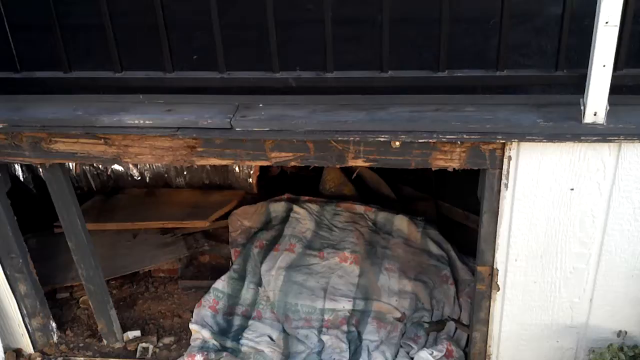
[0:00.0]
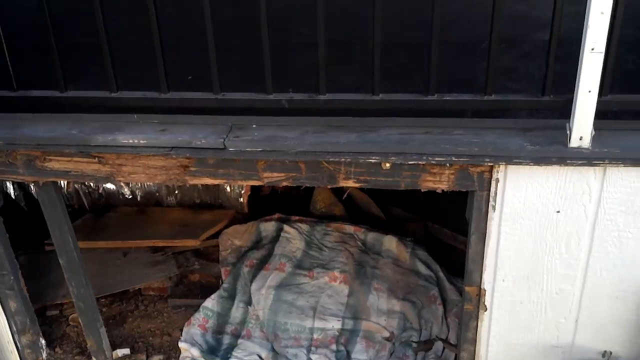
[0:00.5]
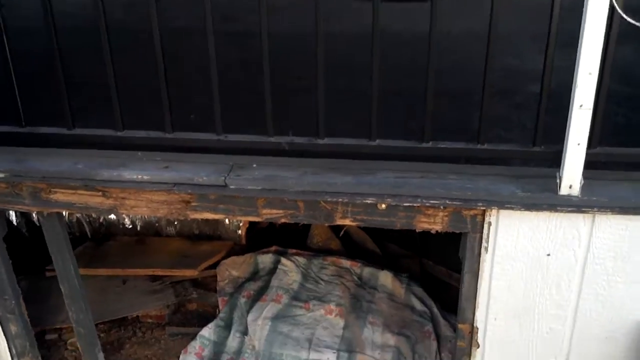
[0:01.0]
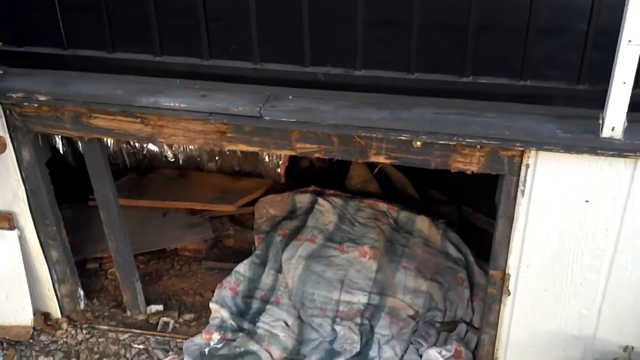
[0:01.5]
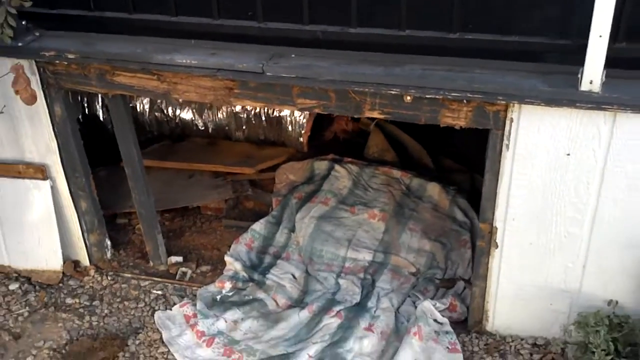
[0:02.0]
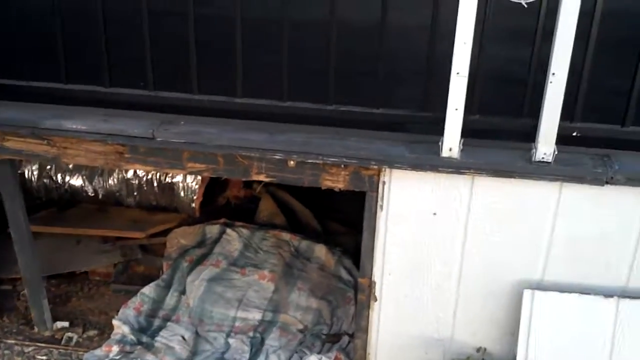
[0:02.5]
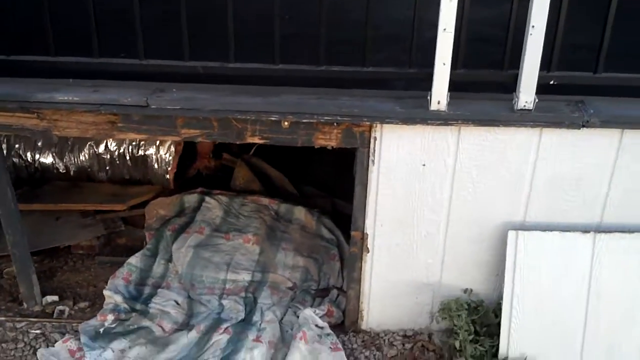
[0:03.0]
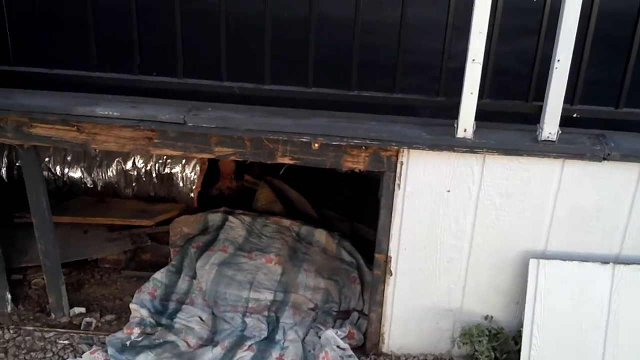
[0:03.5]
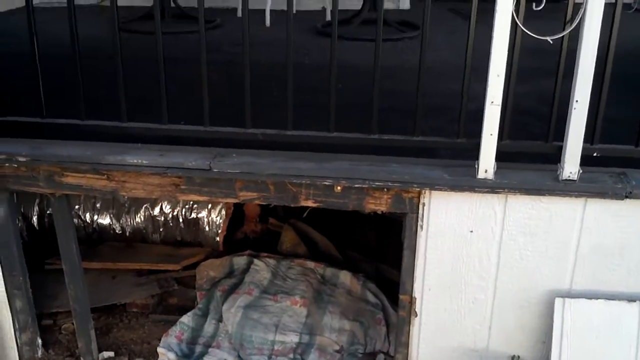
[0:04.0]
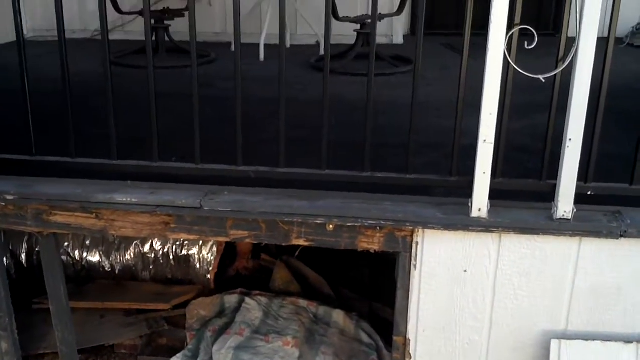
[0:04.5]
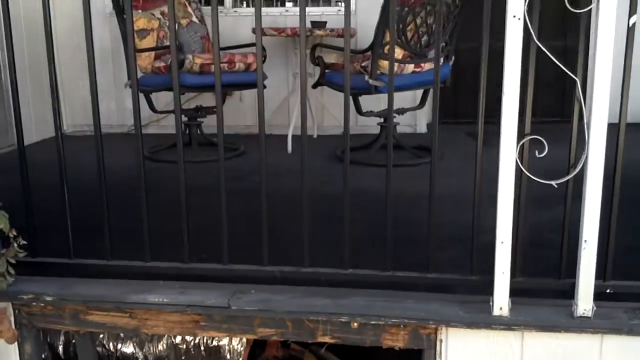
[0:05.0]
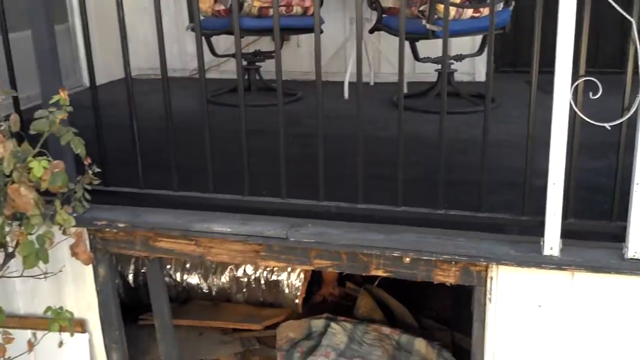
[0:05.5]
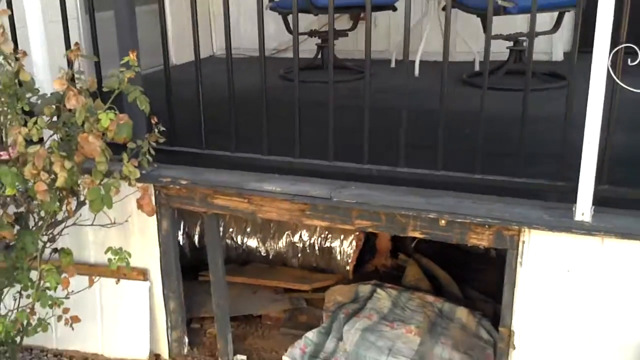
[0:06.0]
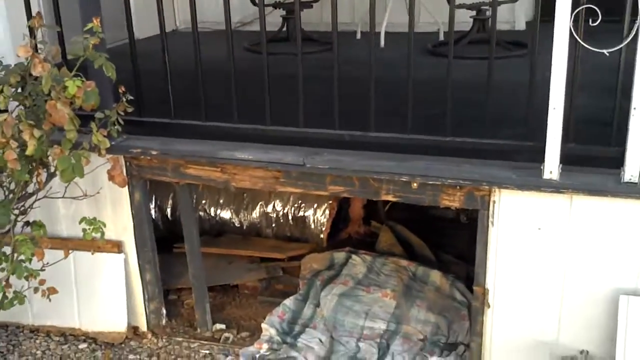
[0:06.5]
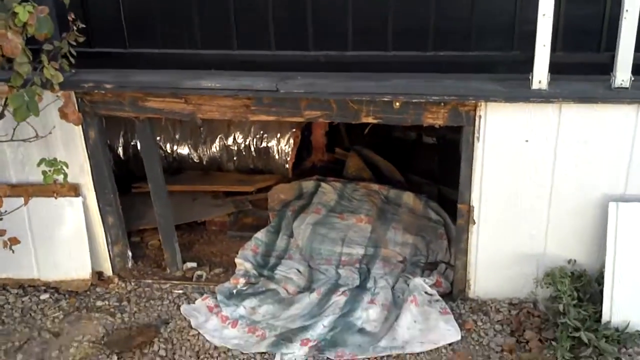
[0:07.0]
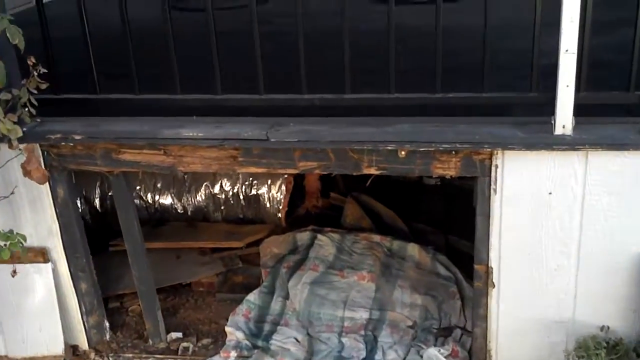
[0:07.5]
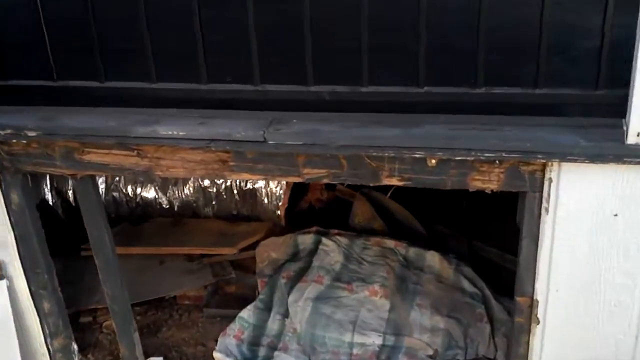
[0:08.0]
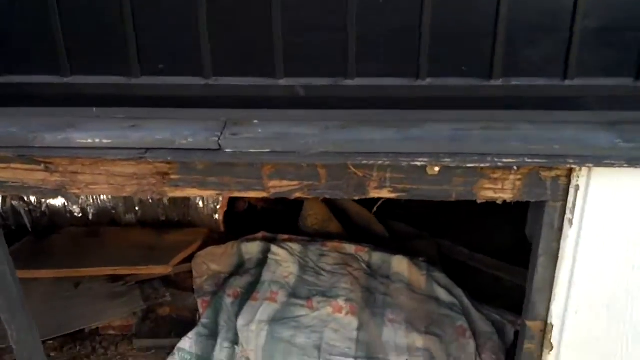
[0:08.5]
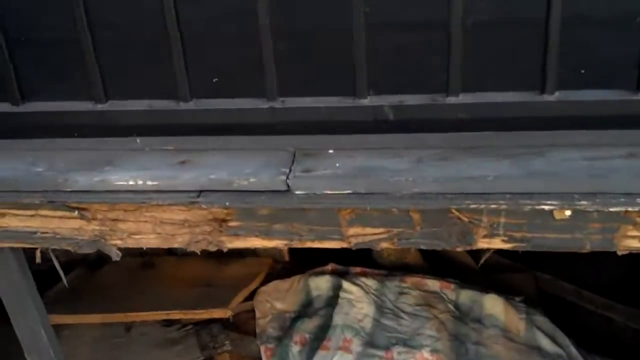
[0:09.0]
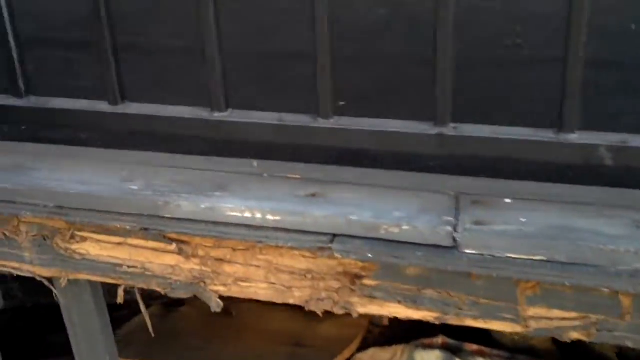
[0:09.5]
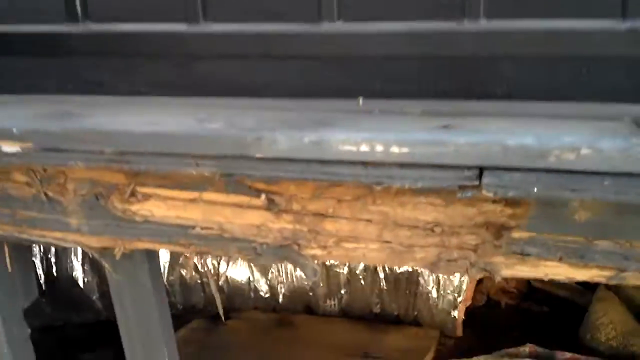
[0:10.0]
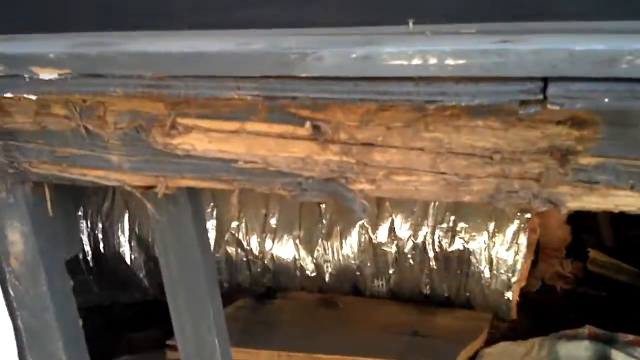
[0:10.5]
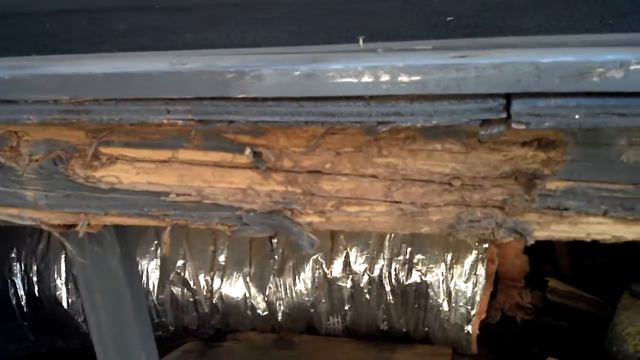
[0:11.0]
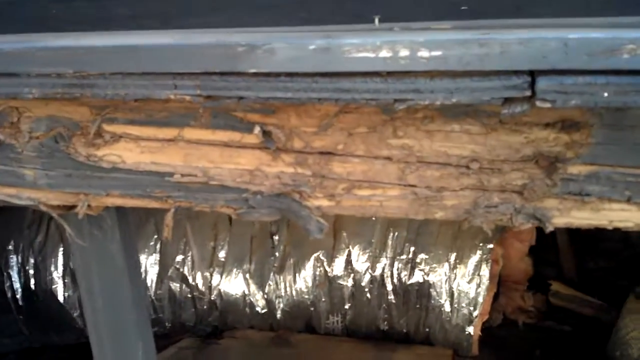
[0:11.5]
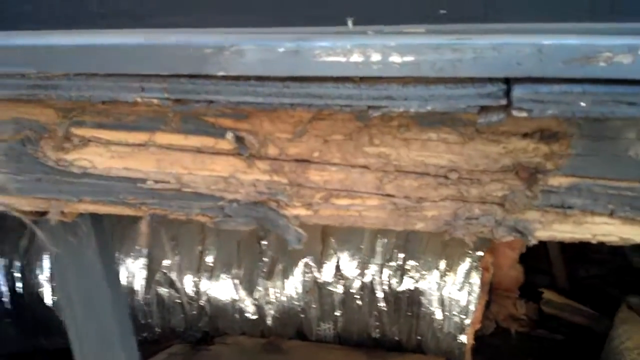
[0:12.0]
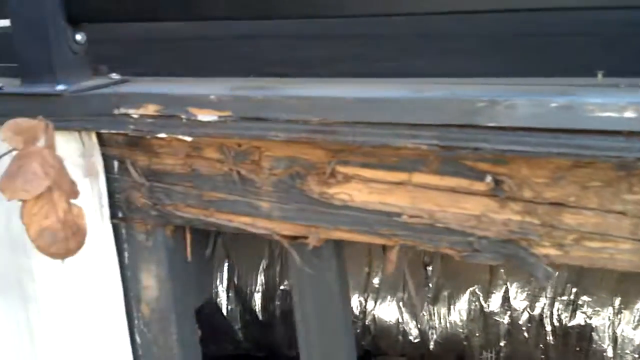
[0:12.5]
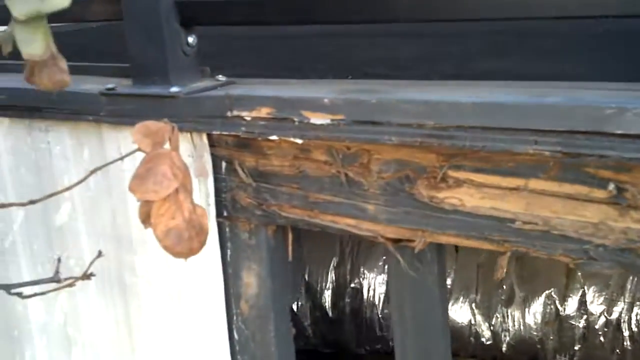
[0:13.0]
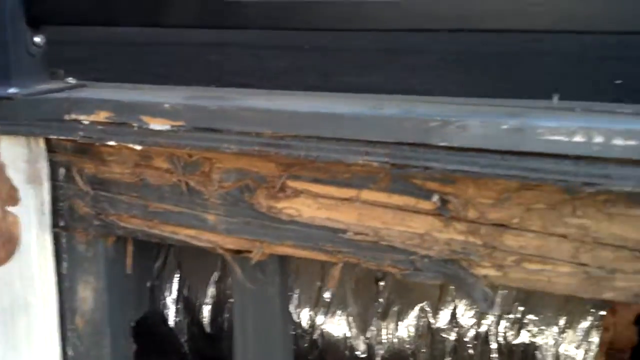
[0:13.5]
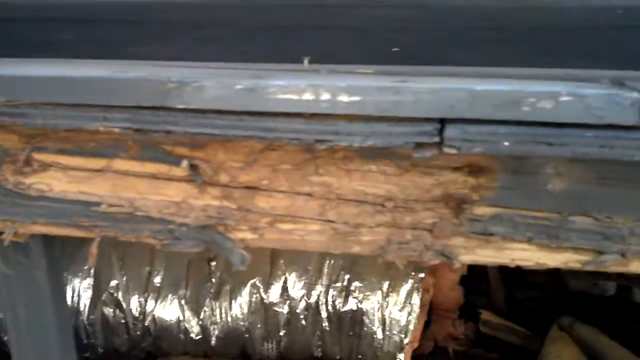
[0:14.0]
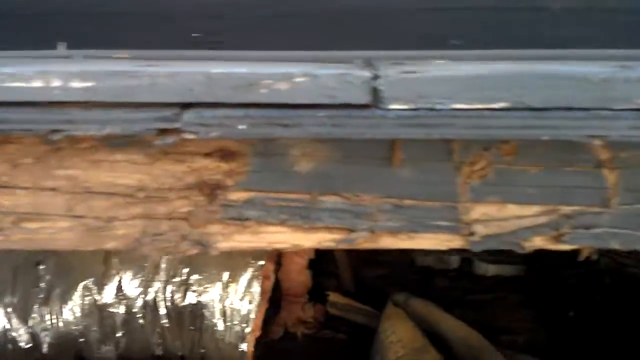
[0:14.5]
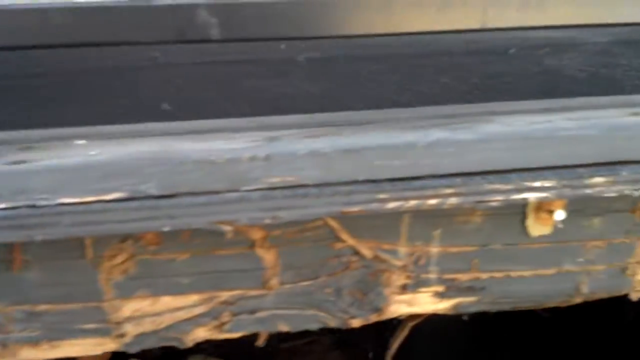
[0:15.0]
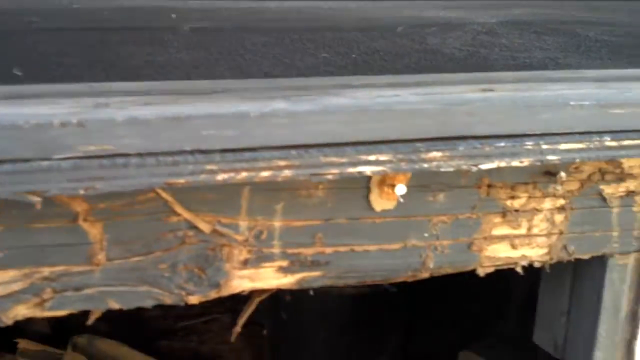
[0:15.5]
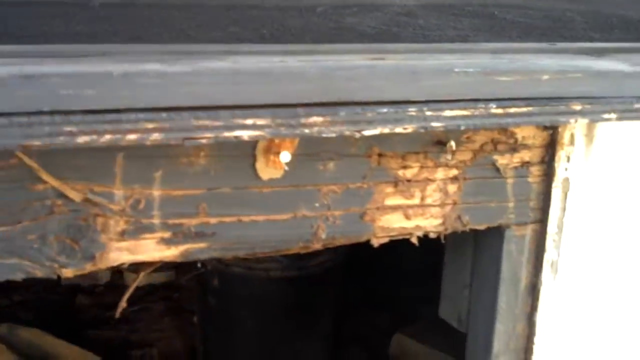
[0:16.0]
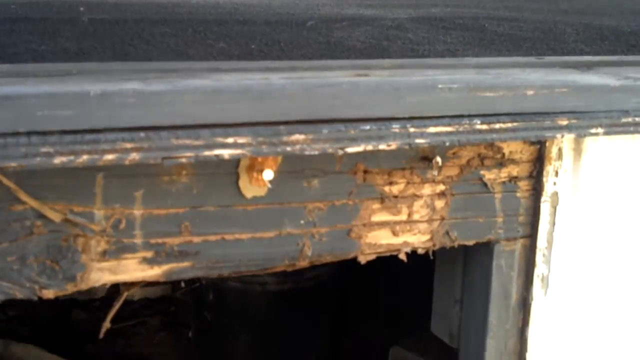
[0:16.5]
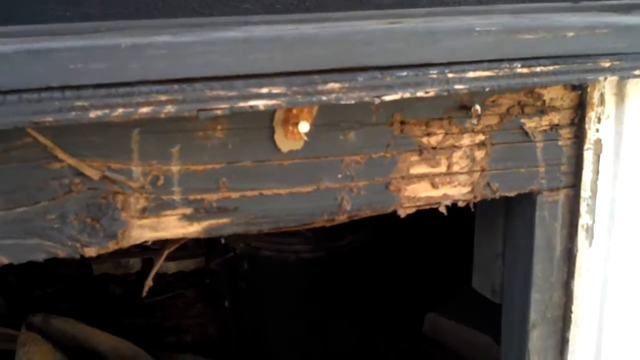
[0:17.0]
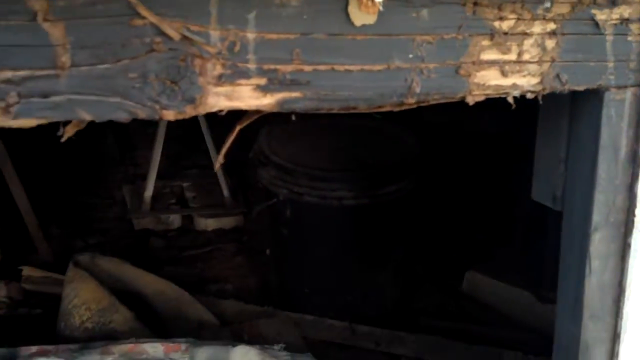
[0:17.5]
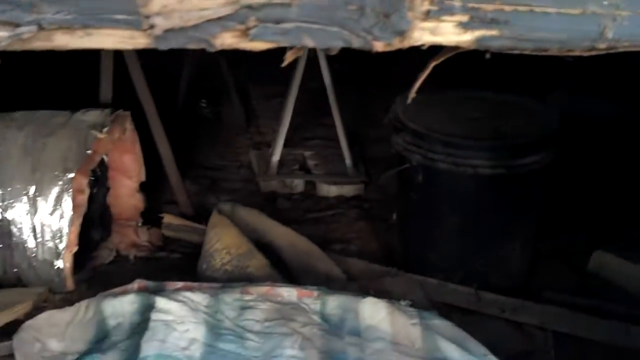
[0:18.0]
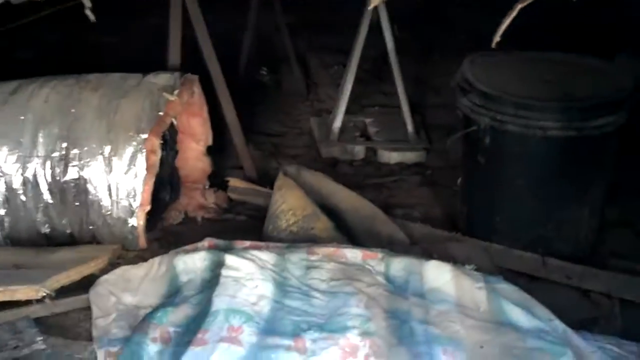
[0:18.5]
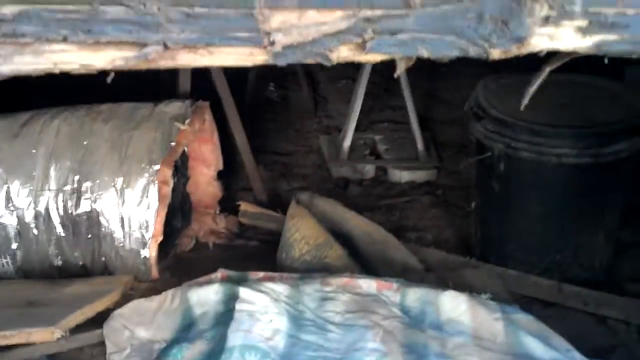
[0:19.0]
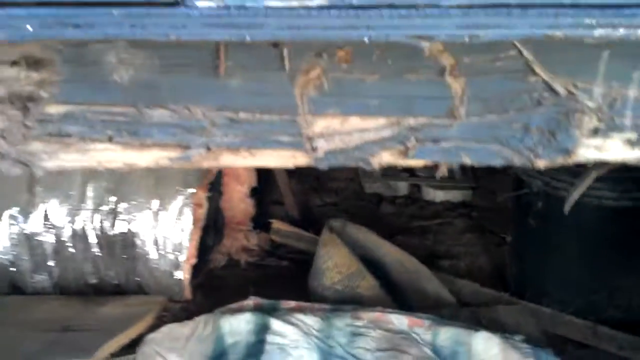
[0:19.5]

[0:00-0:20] The video appears to focus on the crawl space underneath a home, with a railing visible above it. The footage is very shaky. A couple of patio chairs appear, then the camera zooms out a little before zooming in extremely close on the black frame of the porch and the crawl space. The frame is very worn, with pieces that look clawed off or stripped away. The camera focuses in on an opening where a silver duct is visible, possibly an air duct or part of the HVAC system: a tube covered in silver tin foil. An old blanket is on the ground, a dirty, worn green-and-white blanket with some red accents. A little of the home's white exterior paint shows, but the focus stays mostly on the underside of the open hole where the crawl space is. On the left there is a half-dead green bush with some dead leaves on it. Most of the attention is on the top frame, showing how much of it is stripped off. It is unclear what happened in this space, but there appears to be a lot of debris and junk under it.